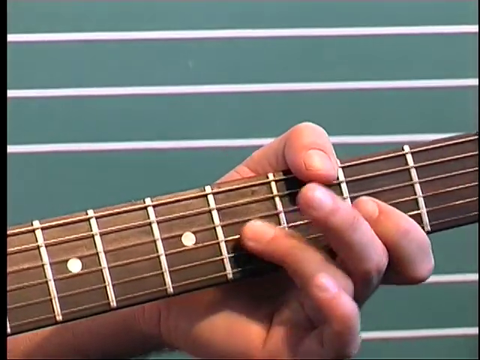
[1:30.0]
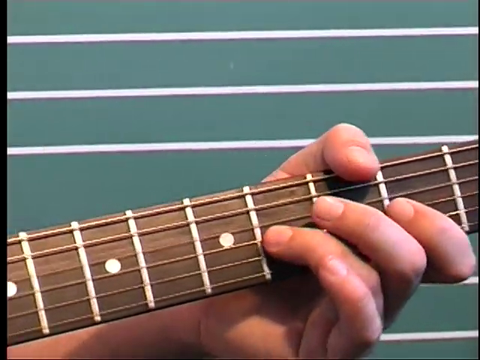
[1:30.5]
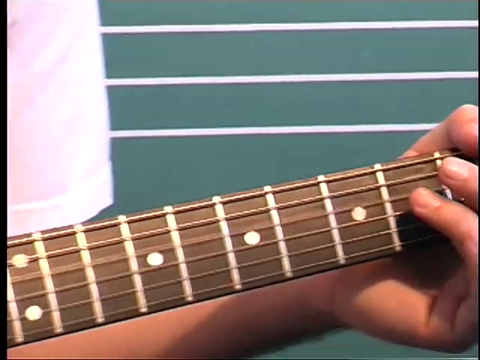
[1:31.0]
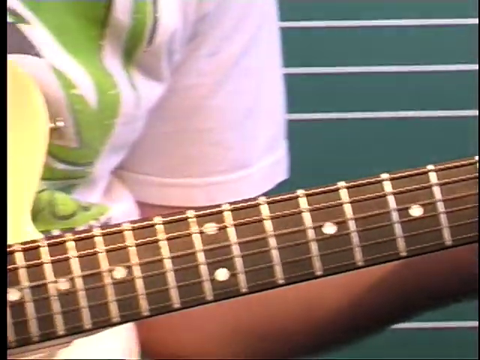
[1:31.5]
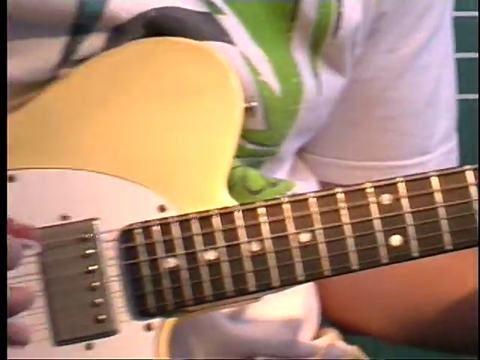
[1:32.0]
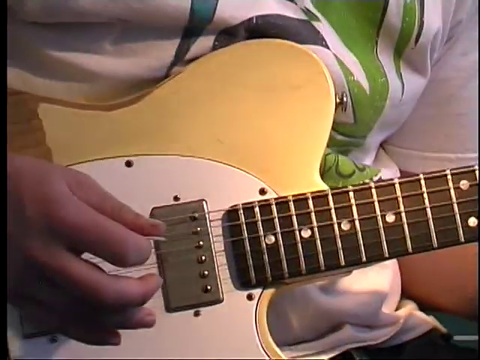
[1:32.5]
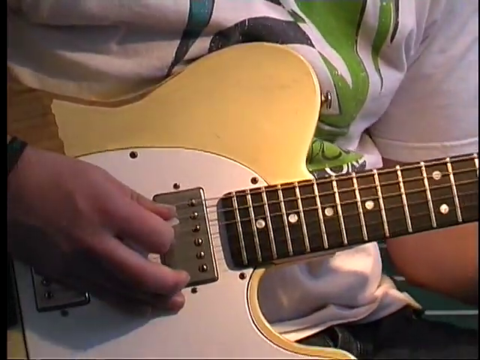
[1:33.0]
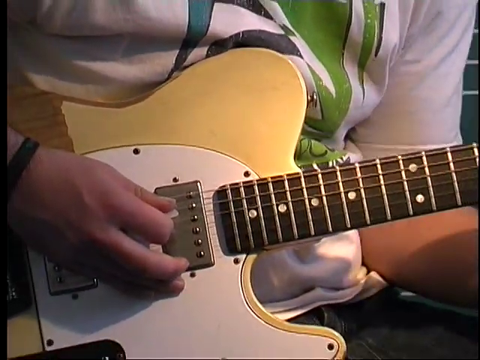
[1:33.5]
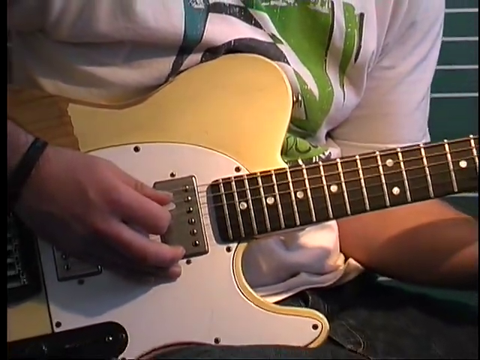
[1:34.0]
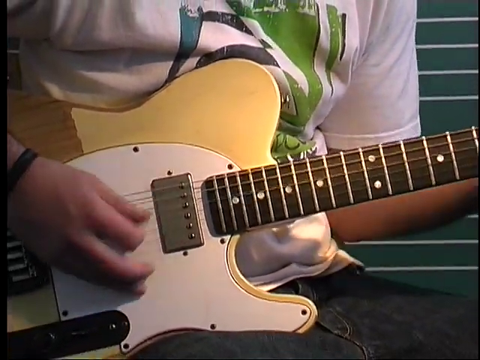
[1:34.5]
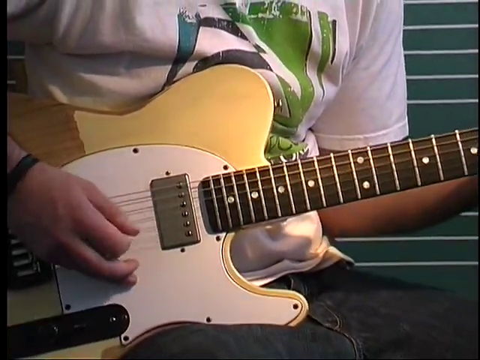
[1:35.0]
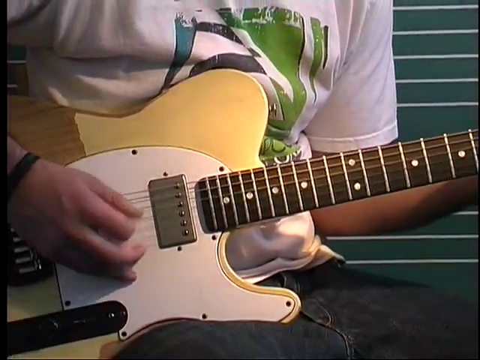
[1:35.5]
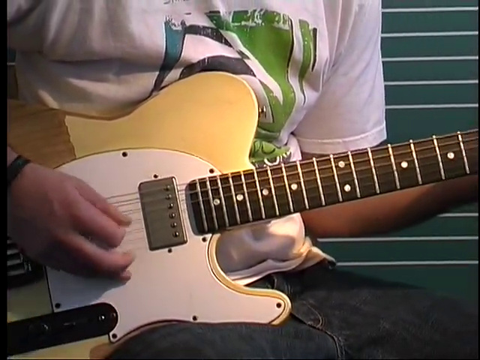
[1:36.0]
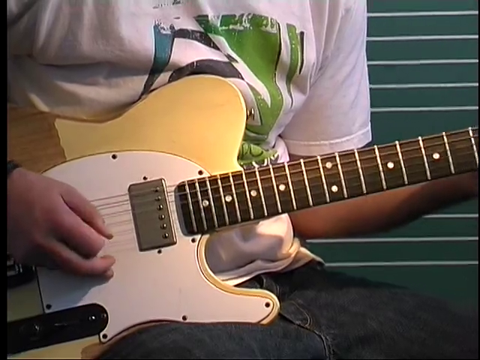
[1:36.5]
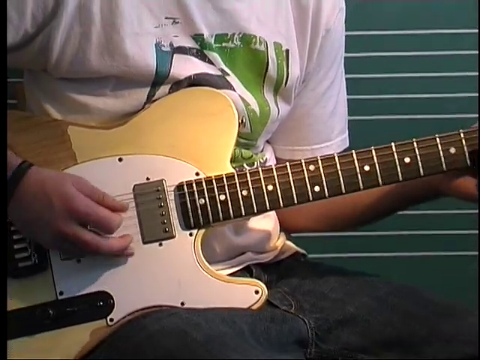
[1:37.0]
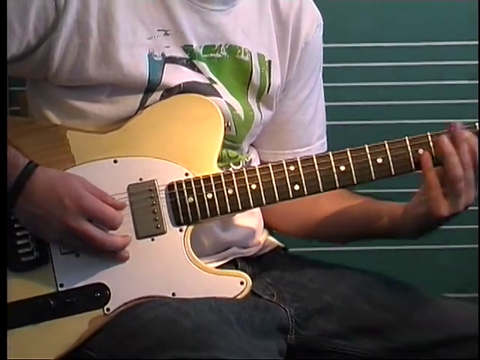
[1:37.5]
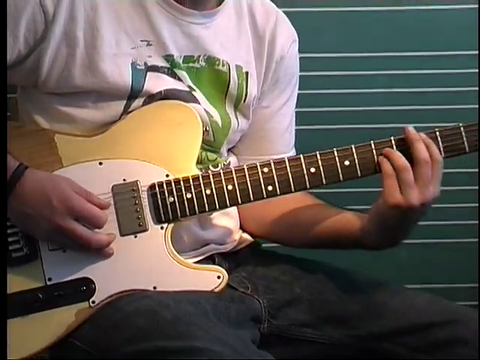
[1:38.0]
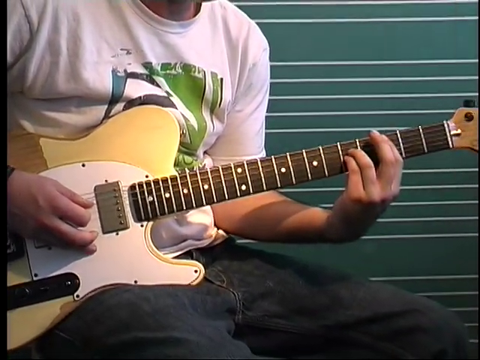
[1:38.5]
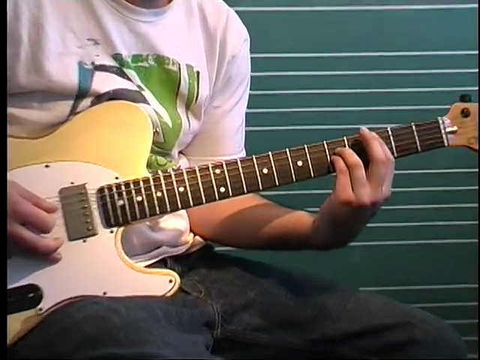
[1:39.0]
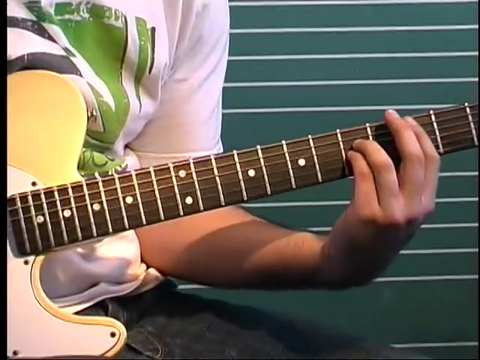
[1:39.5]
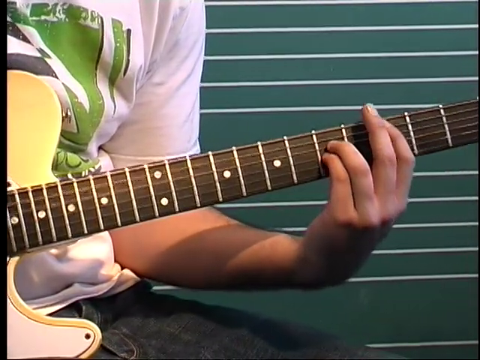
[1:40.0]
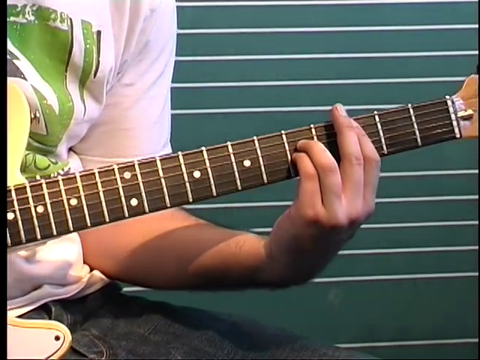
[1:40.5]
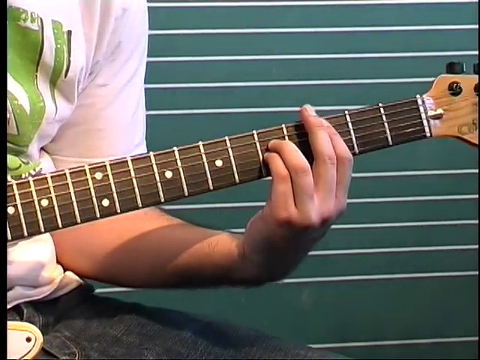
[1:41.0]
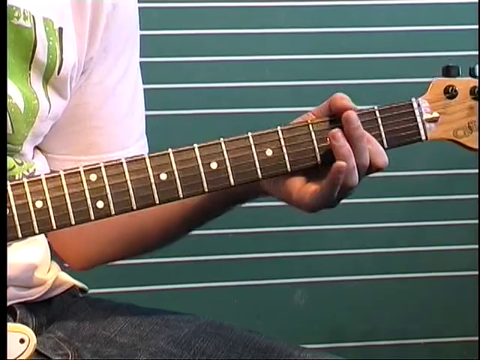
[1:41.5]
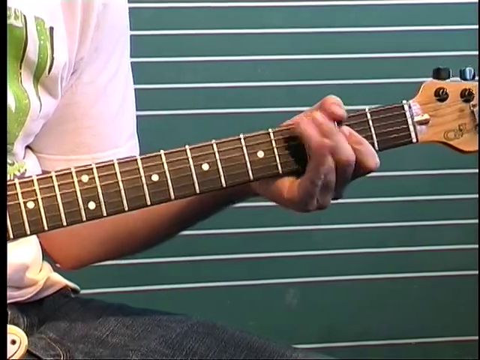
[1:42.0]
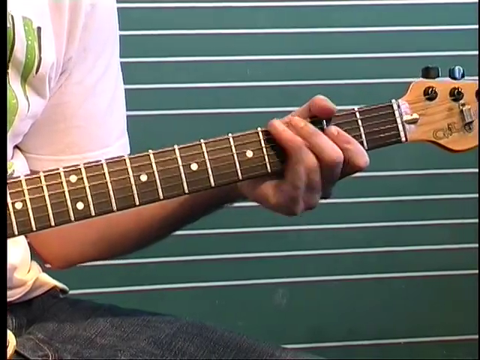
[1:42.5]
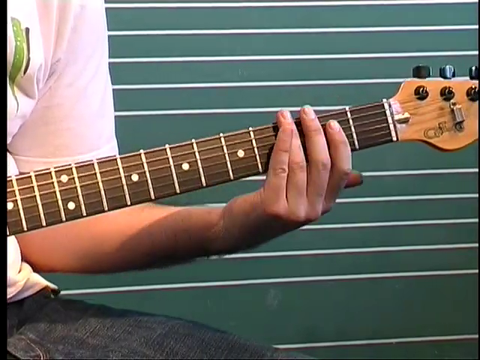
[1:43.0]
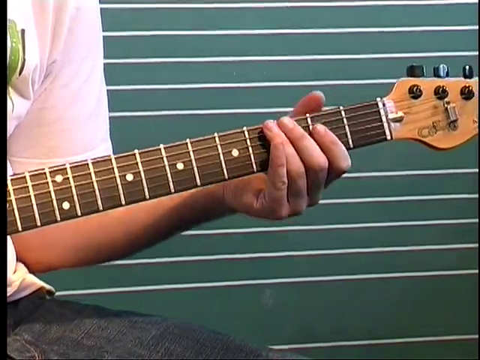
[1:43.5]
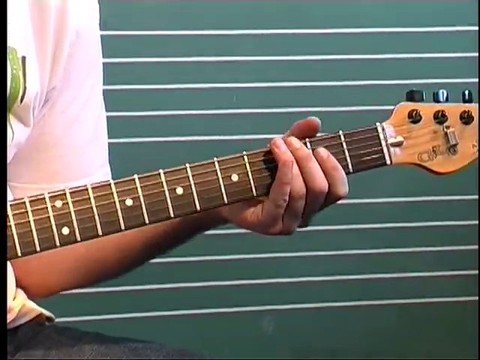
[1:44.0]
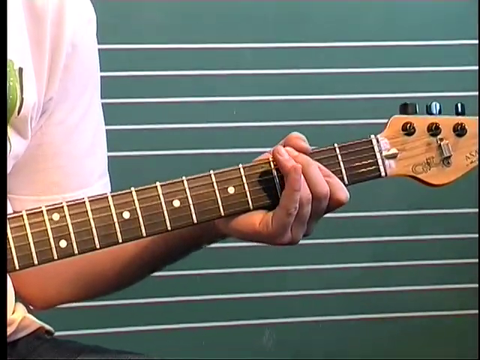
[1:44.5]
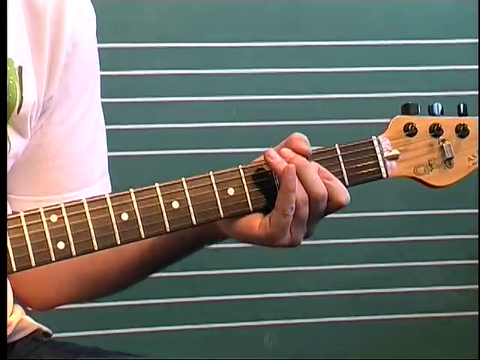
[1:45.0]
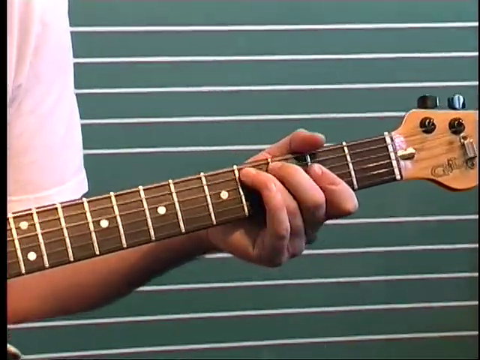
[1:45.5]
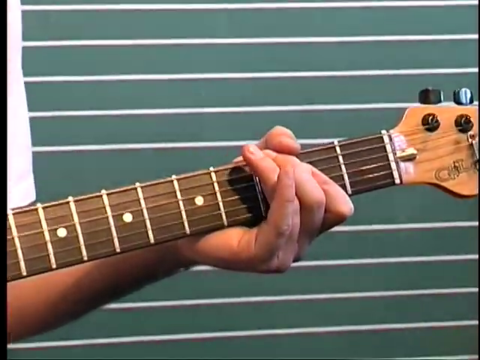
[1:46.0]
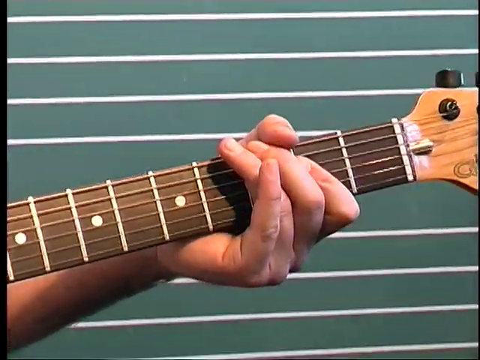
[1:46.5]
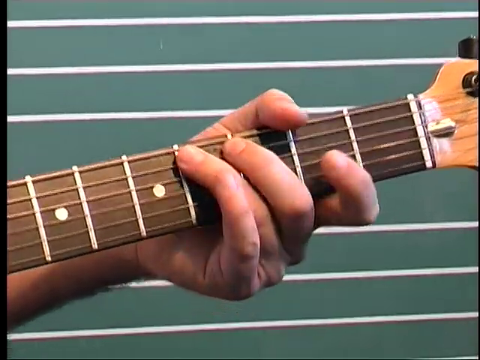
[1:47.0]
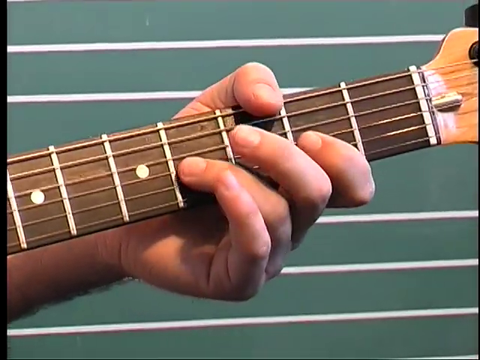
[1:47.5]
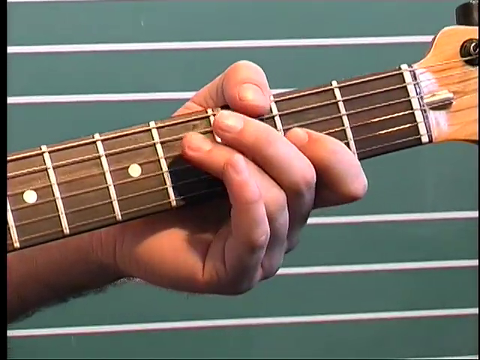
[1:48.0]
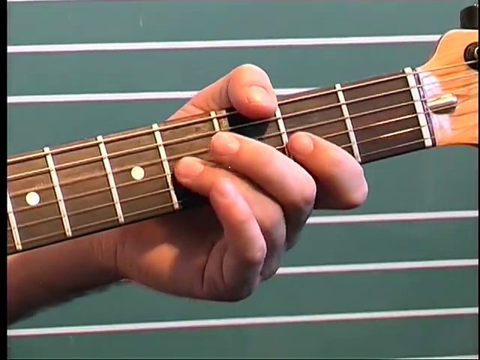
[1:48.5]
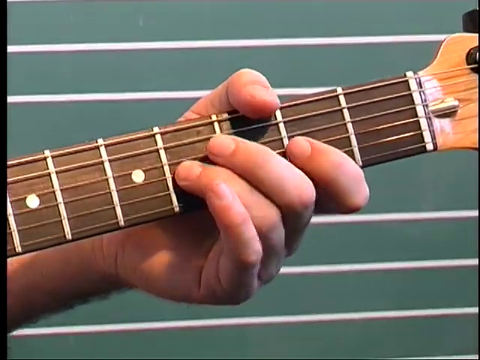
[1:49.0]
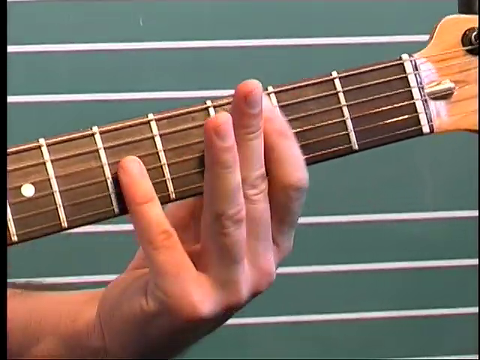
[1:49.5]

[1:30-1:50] A close-up shows a man's hand on the neck of a guitar pressing the strings. The camera pans left to show his right hand holding a small white pick over the yellow and white body of the guitar. He starts strumming, his hand moving up and down. The camera backs out a bit so both hands are visible, one strumming the strings and the other pressing notes on the neck. The camera then zooms in somewhat closer on his left hand pressing the notes on the neck. He continues playing the song with what look like complex movements using all his fingers, and the camera zooms in a bit closer so it is clear which strings each finger is pressing.